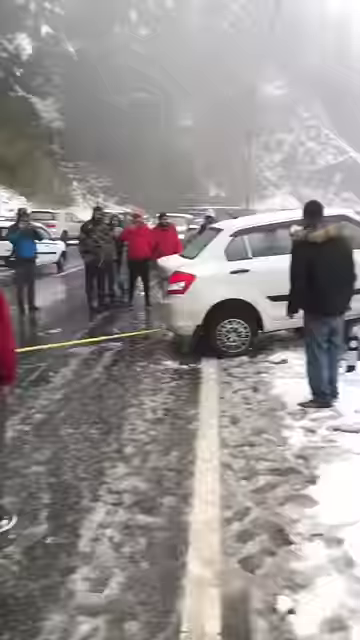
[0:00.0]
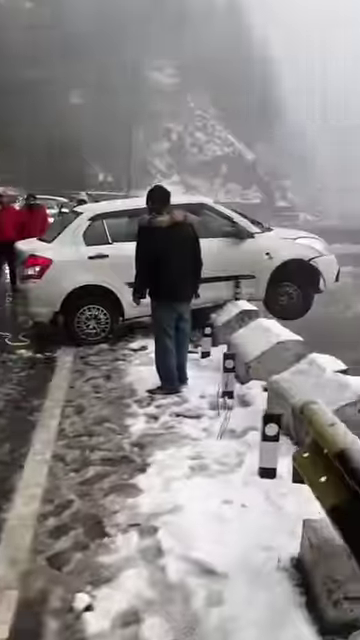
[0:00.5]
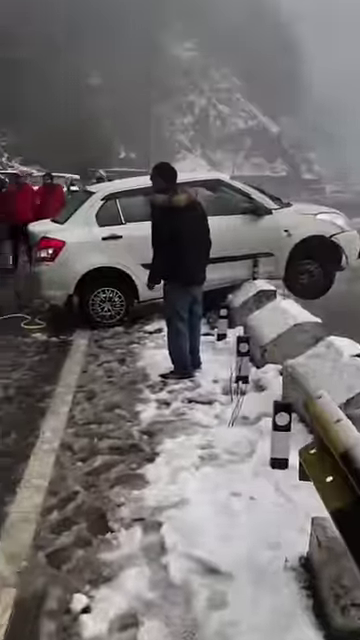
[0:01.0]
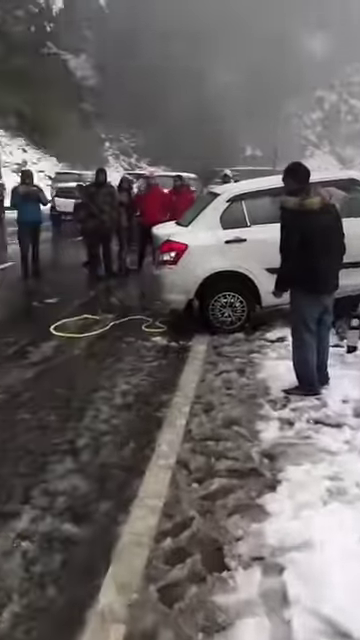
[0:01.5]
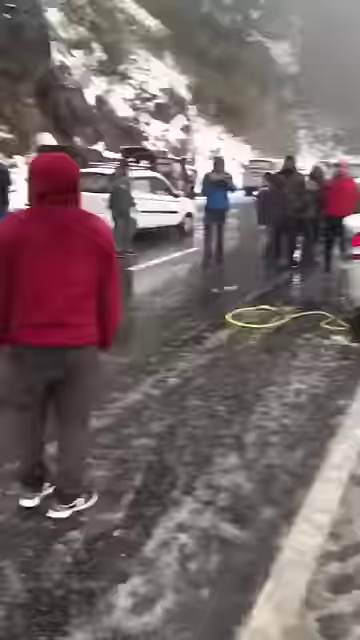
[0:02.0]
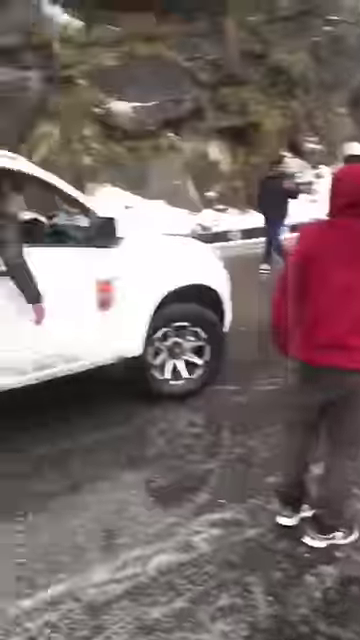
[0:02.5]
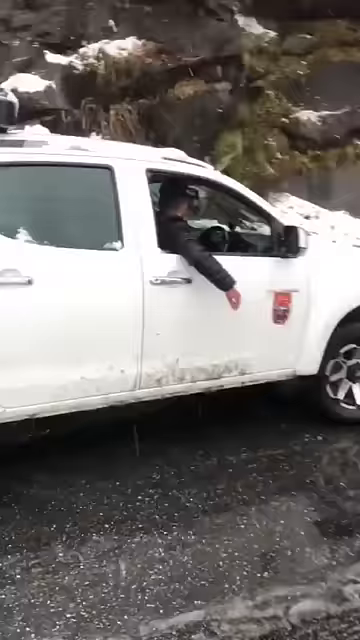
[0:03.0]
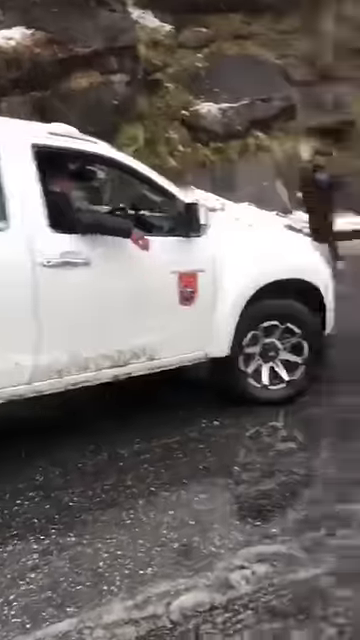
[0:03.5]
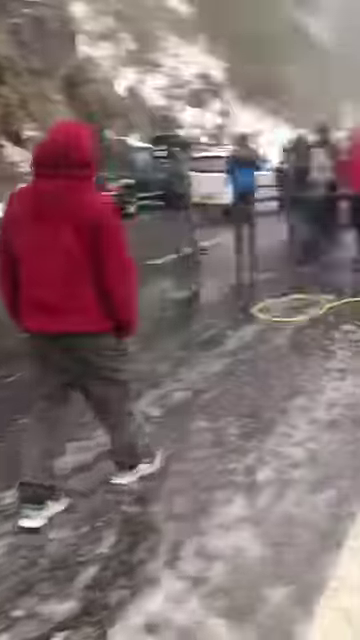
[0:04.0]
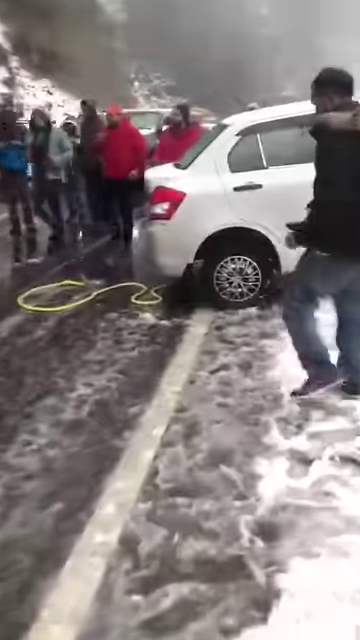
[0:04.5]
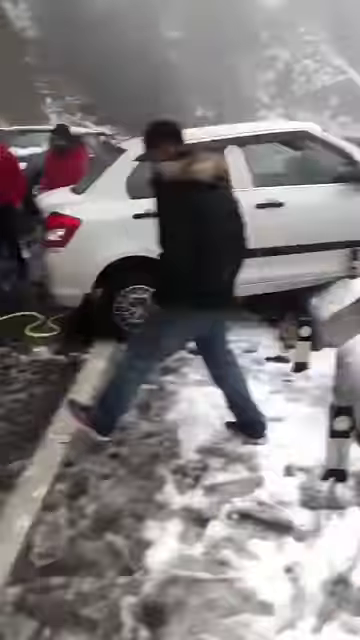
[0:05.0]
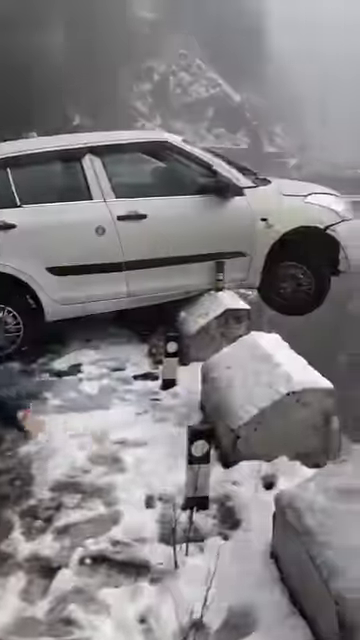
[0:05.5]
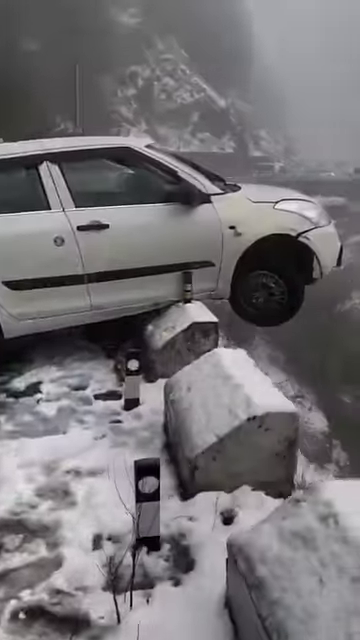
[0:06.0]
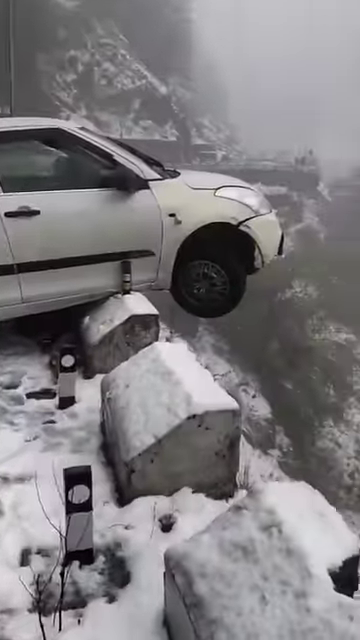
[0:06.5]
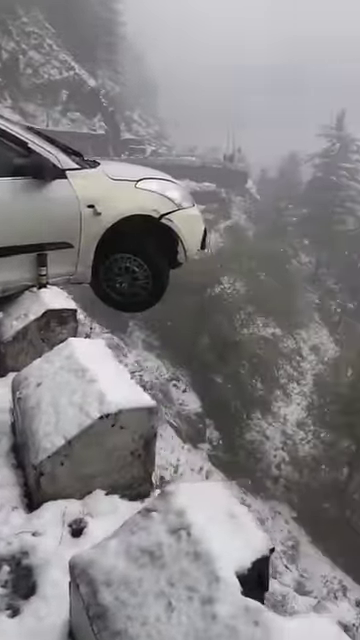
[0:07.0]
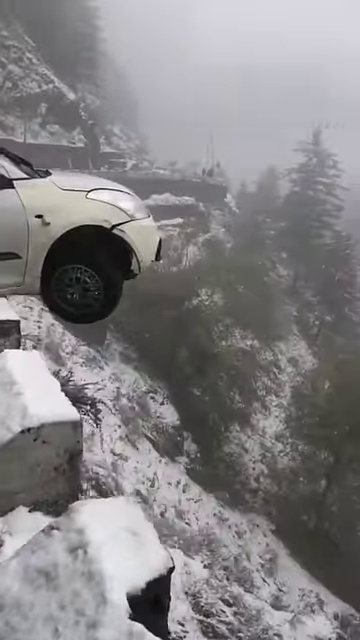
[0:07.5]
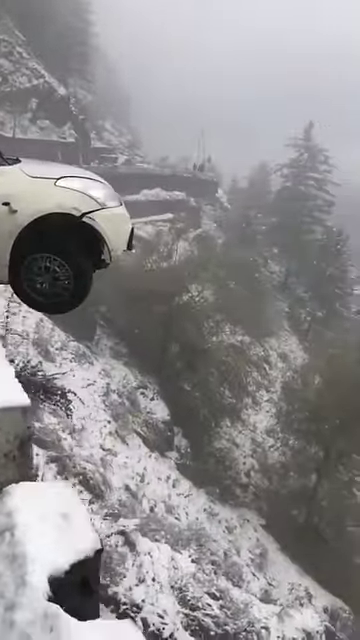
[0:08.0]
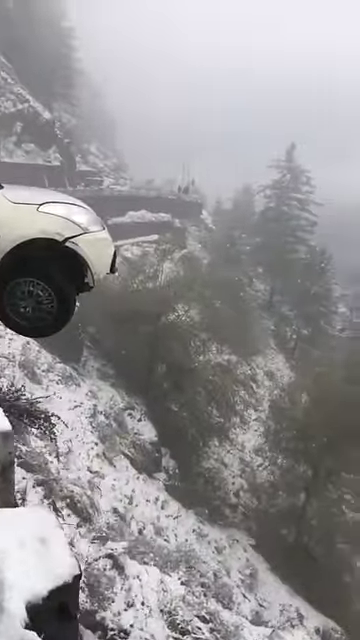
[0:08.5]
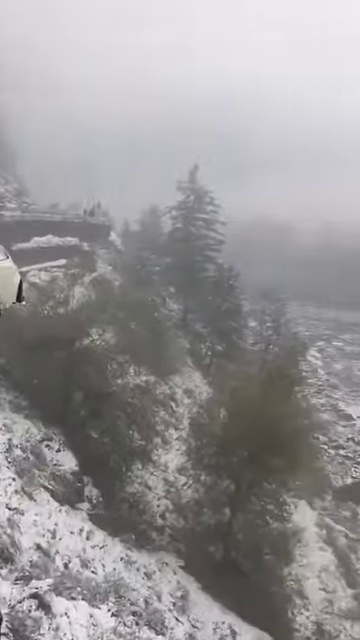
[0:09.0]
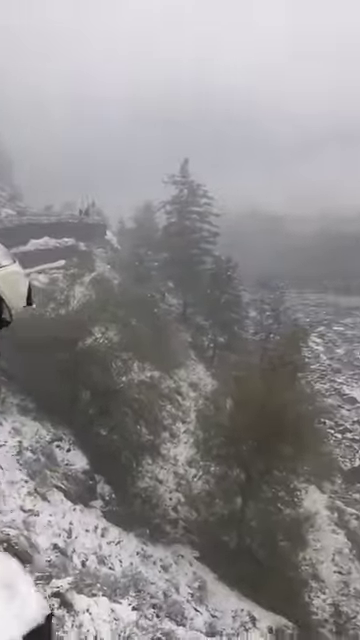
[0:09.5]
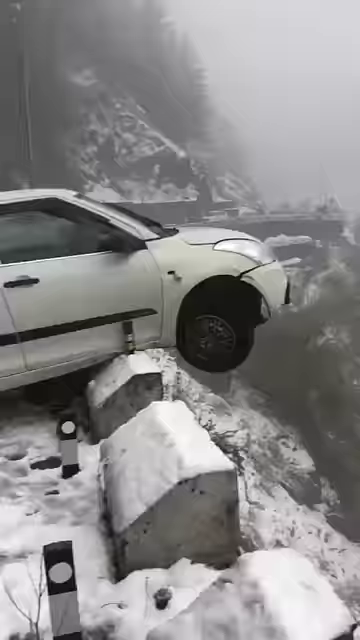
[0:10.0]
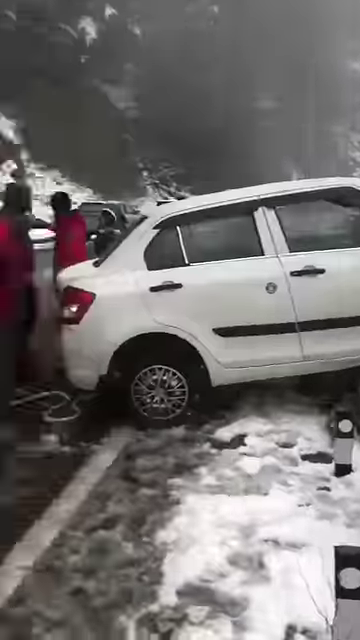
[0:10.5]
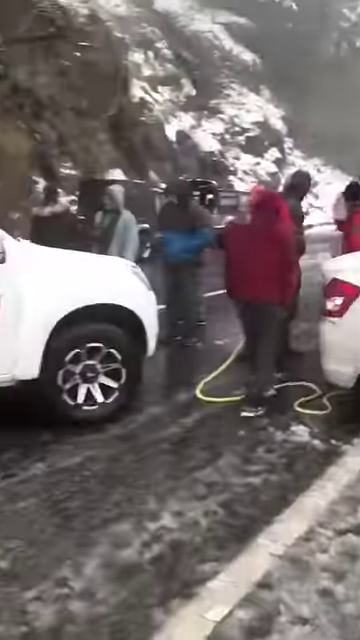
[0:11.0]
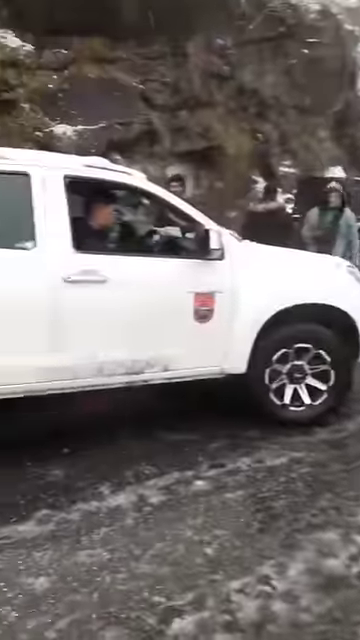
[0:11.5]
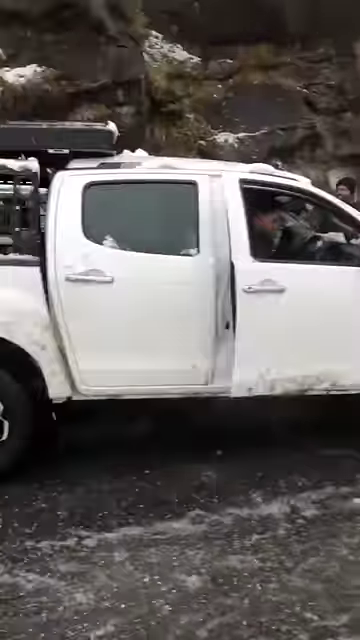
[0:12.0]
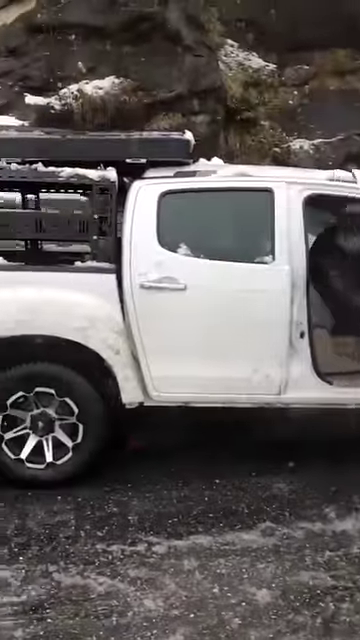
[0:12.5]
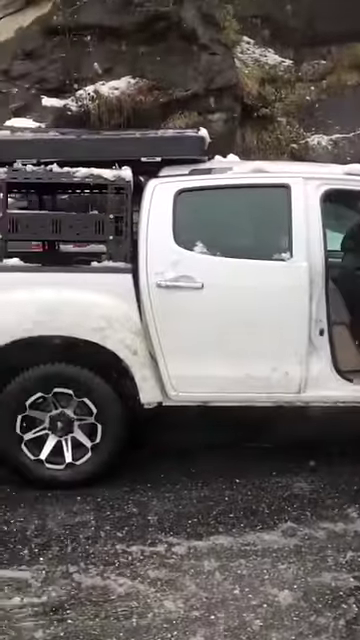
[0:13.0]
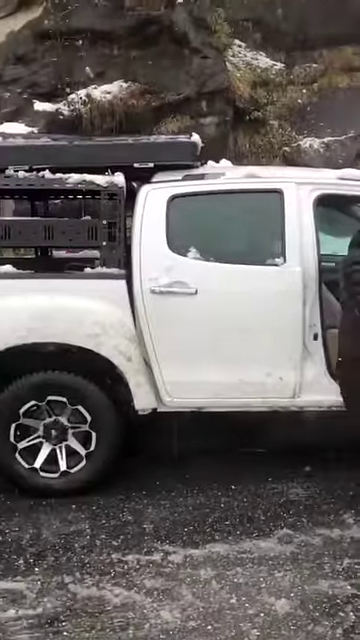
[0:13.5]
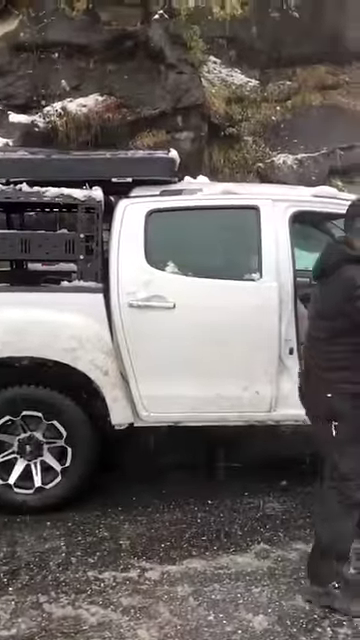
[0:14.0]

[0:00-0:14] The video is titled Snowfall Minnelli 2022, #Snowfall, #YouTube. A small white car is in a mountainous area with snowy roads. The car has apparently skidded and almost gone over the barriers on the side of the road, which would have sent it down a steep cliffside, but the barriers stop it. Only the front wheels and a little of the undercarriage hang off the side of the mountain, and the barriers hold the car in place. Several men stand around the car. Behind the car is what looks like a truck, possibly a rescue truck or just a four-wheel-drive truck, and it appears to have ski mounts in its bed. A yellow tow cord is hooked onto the back of the car, apparently so they can try to pull it back over the barriers and onto the road.